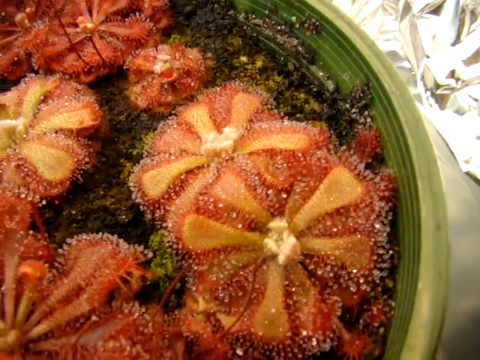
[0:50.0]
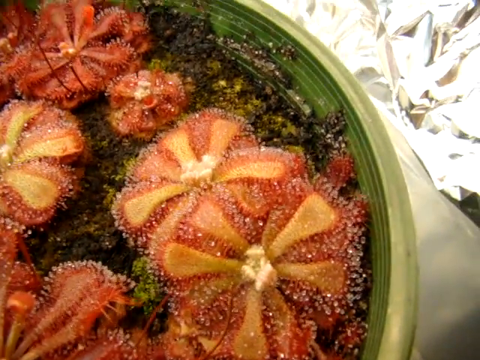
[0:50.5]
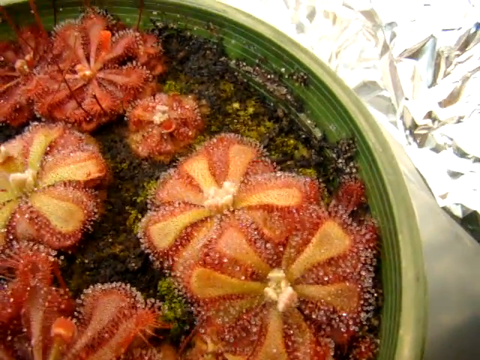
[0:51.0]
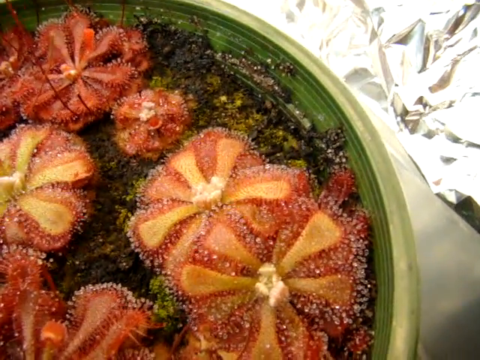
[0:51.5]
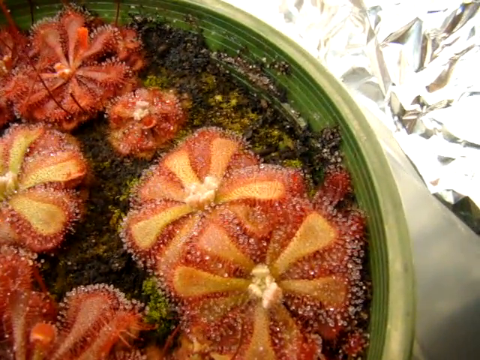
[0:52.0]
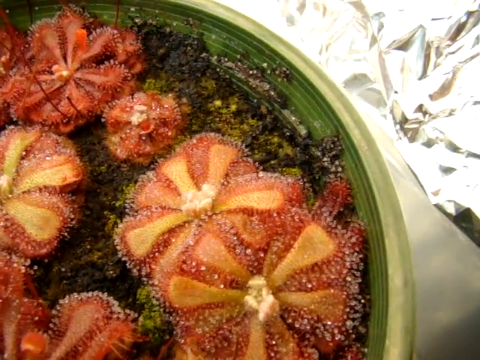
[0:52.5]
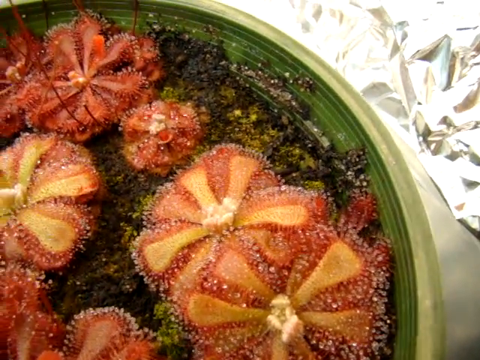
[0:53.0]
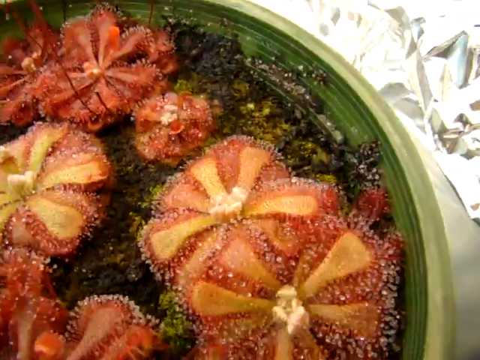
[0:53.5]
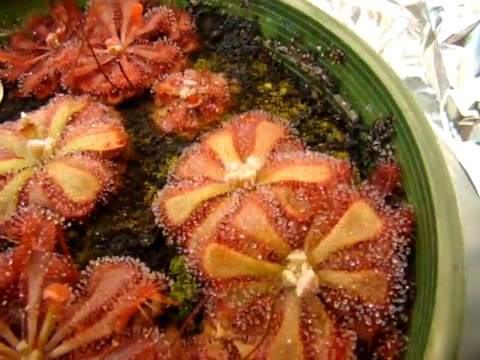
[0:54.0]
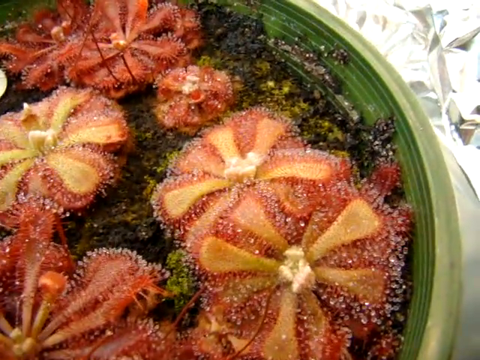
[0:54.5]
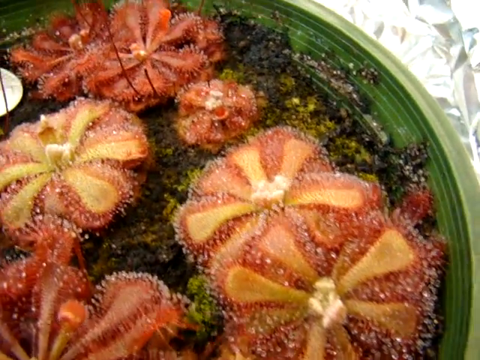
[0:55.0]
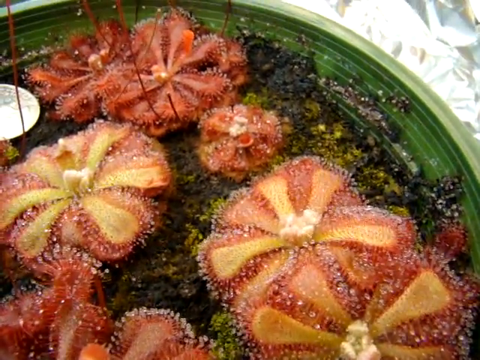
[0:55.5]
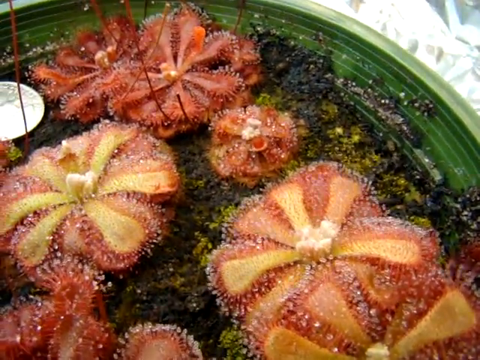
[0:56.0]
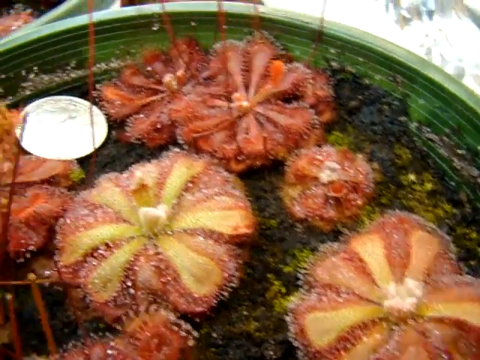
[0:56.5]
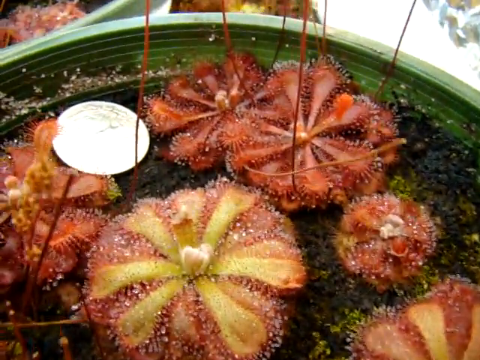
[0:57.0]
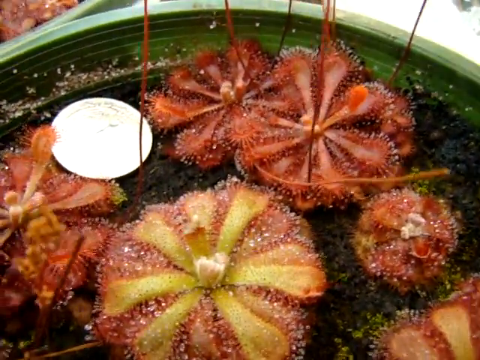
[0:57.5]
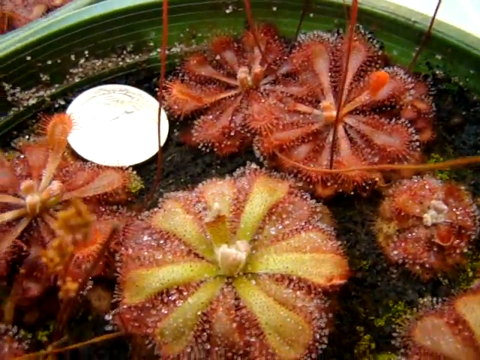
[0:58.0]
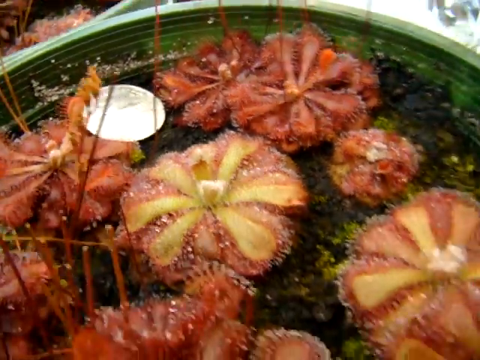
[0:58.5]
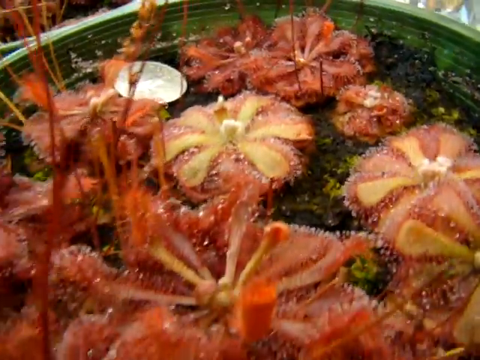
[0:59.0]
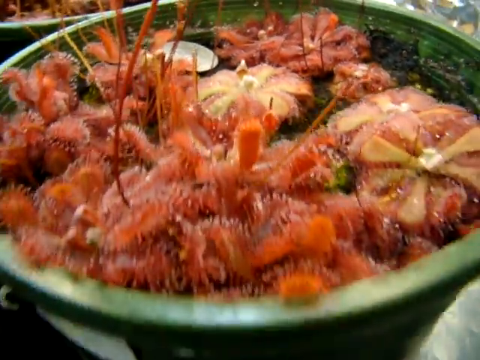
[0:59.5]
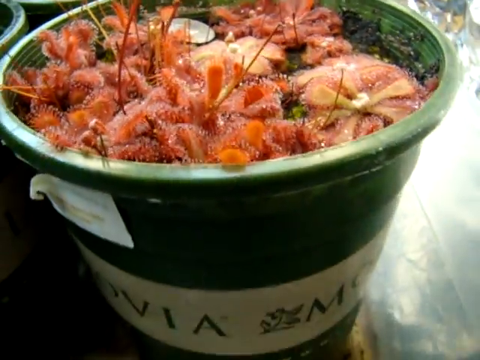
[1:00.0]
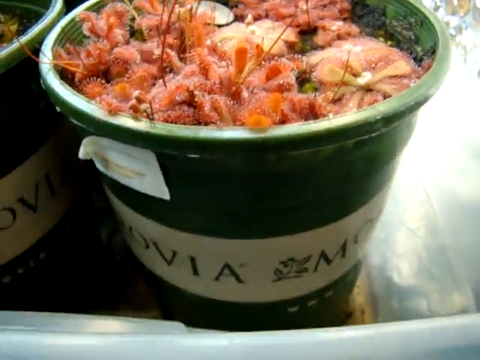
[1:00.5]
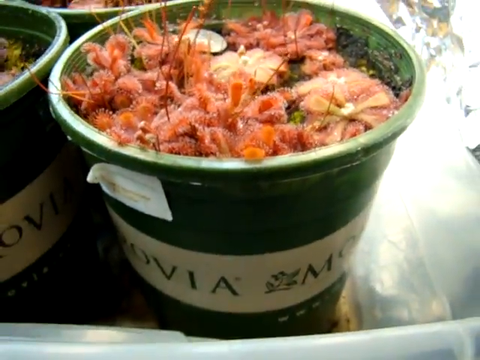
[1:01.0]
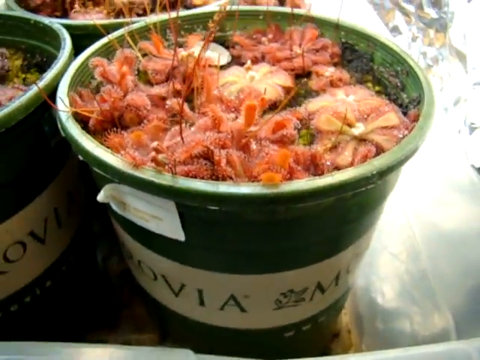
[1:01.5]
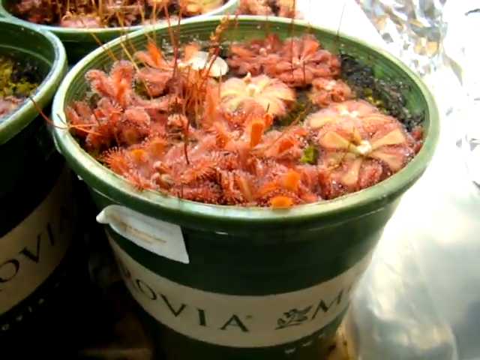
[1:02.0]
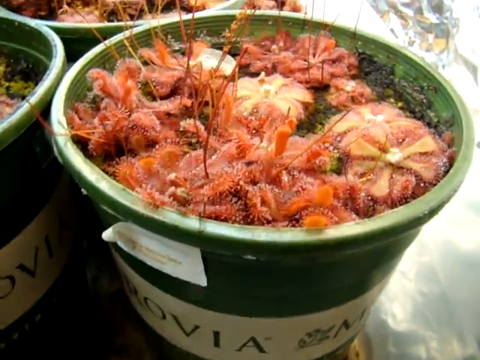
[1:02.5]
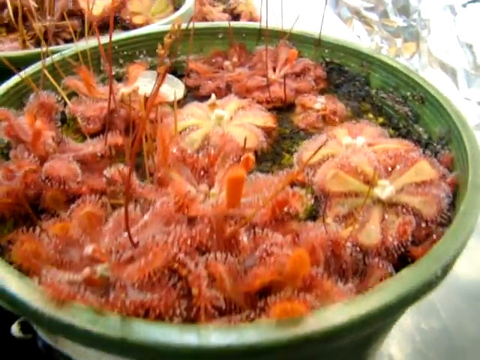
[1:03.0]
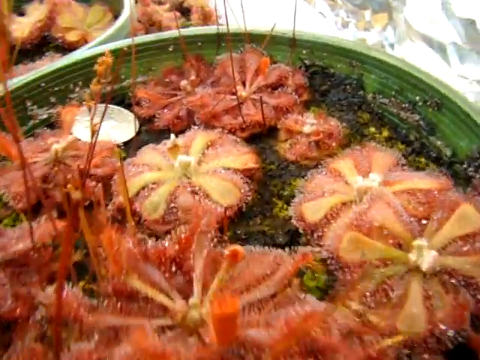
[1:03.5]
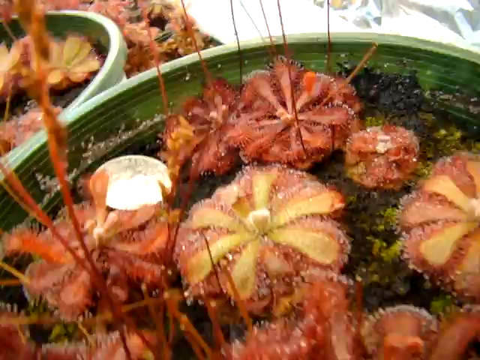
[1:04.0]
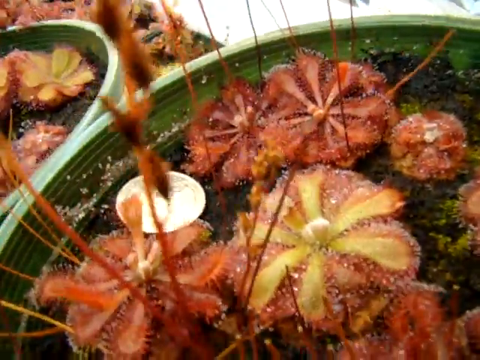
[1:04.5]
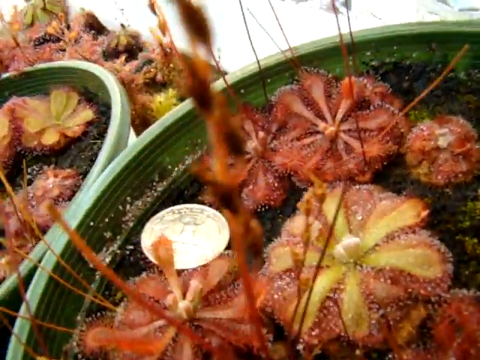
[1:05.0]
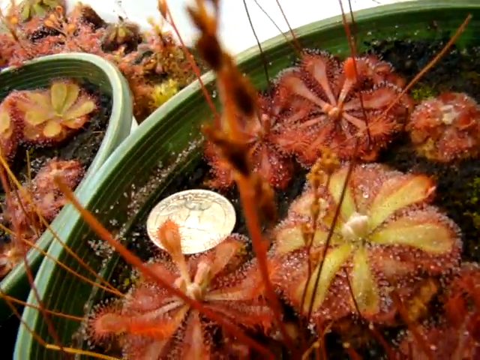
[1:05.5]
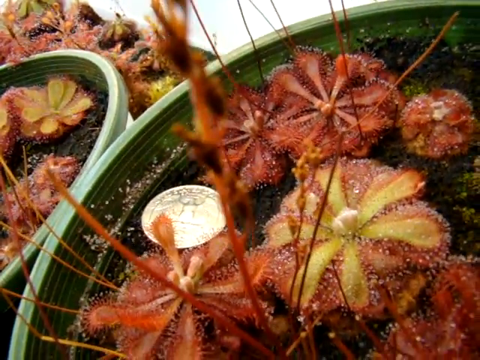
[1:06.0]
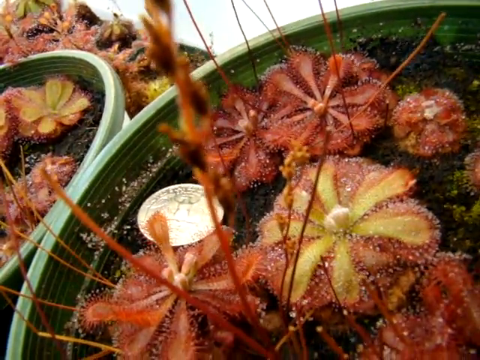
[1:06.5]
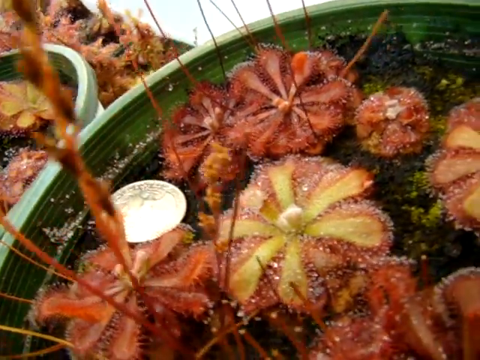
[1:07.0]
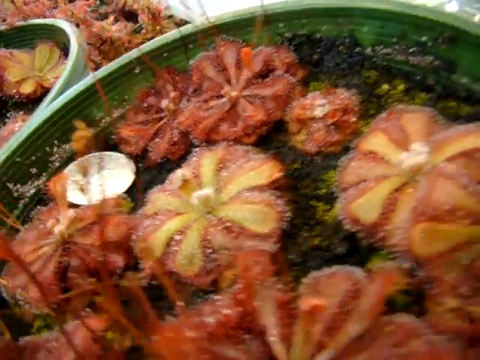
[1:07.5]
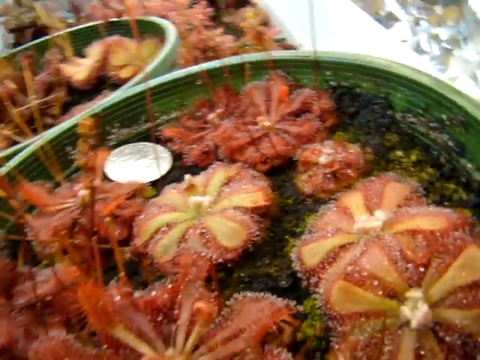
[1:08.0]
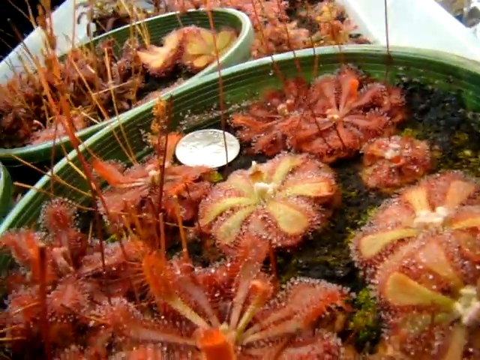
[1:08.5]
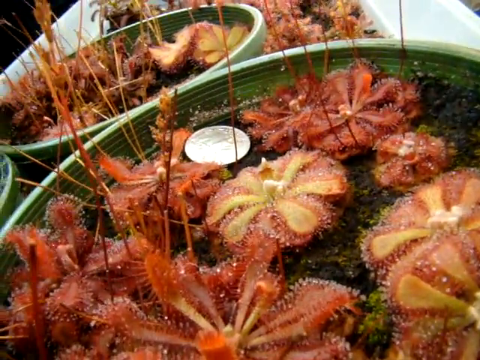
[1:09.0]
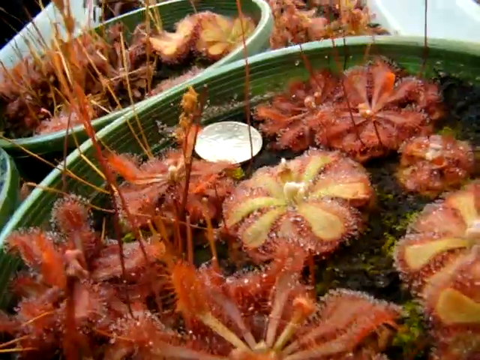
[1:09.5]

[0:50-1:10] The green potted plant is shown with a small bit of paving and what looks like foil on the side. The outside of the pot is shown, with white labeling written in black, though the writing cannot be read. The view then returns to the plant itself, which looks like it gets more red as it grows. It does not get tall but stays flat in its soil. Its roundish shape is visible, starting small and growing bigger. There is no stem underneath; a small stem grows up right after the leaves. The foil is still very visible, and the stem is visible.